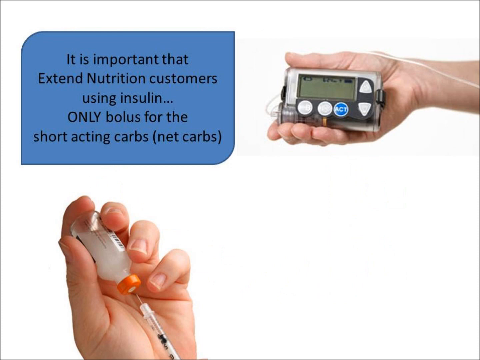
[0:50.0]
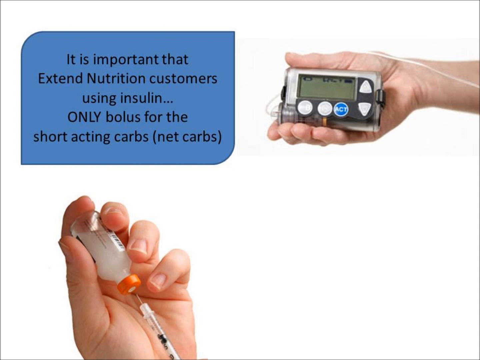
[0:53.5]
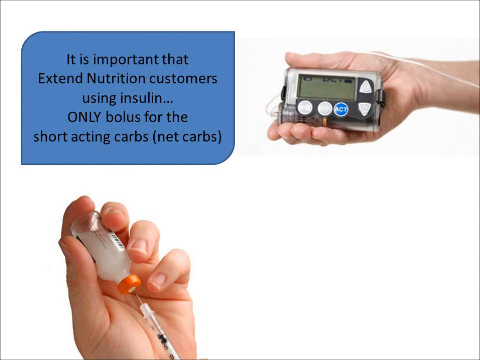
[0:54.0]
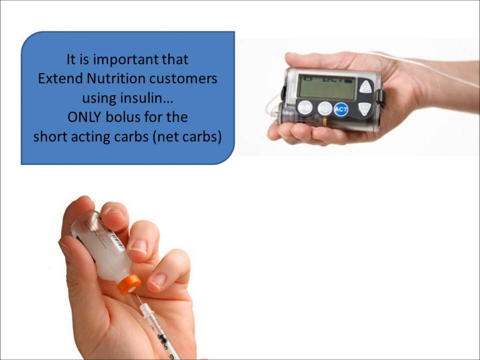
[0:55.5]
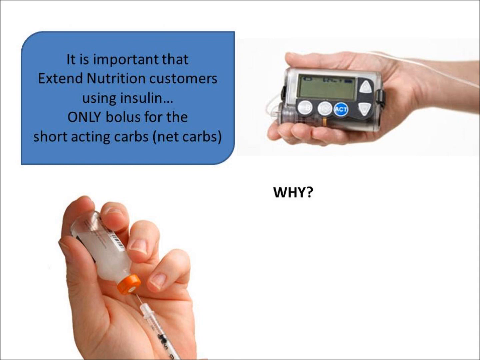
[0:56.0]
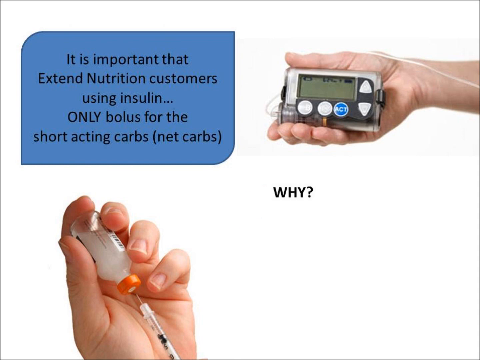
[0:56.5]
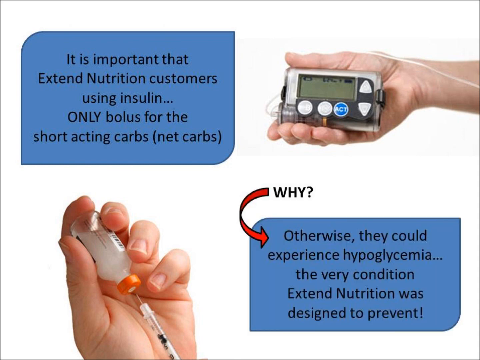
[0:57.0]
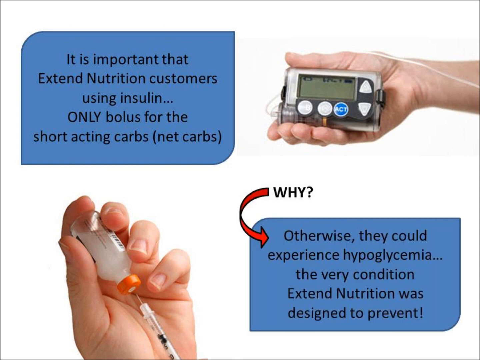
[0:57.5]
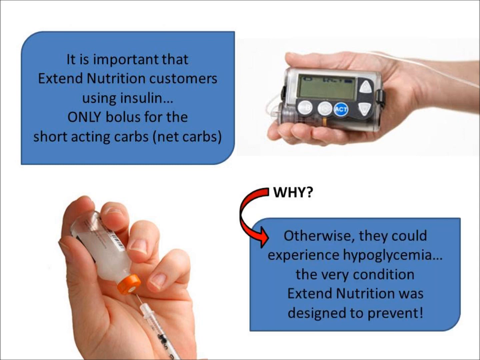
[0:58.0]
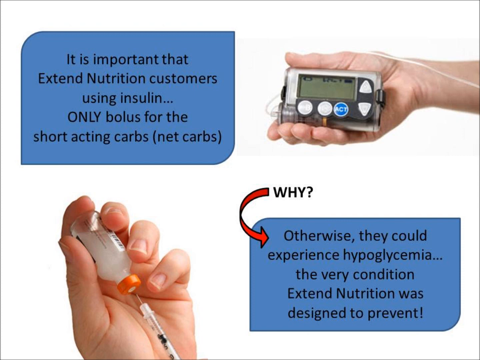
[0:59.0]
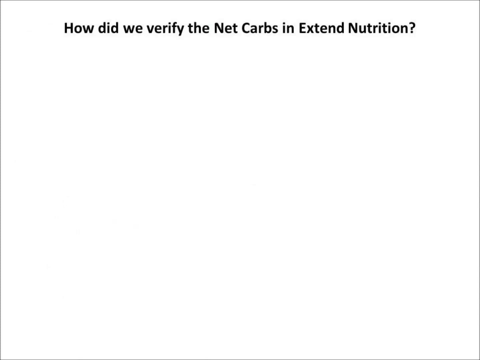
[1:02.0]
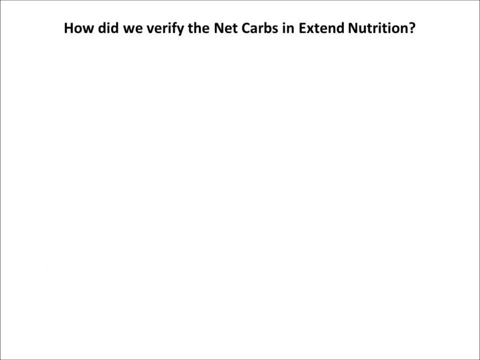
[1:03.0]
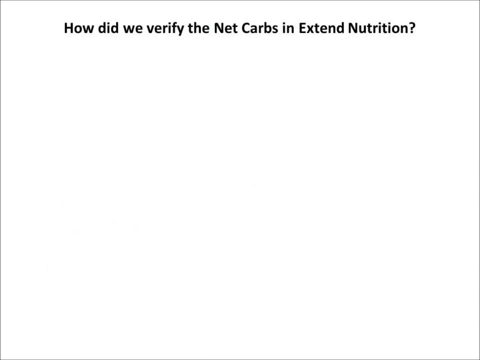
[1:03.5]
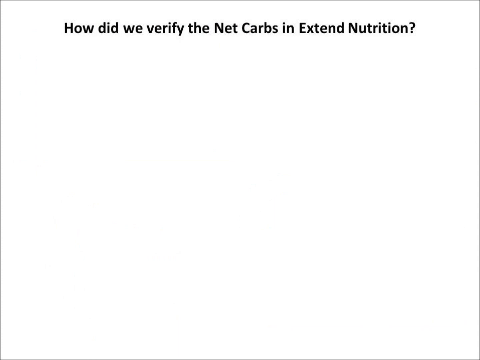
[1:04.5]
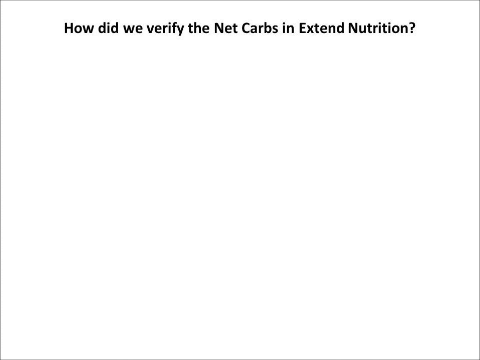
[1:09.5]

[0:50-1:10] The screen with the person, the blood sugar monitor and the injection, apparently an insulin injection, remains. Added to the text already there, "why?" appears, and then a small graphic pops up reading "otherwise, they can experience hypoglycemia, the very condition Extended nutrition was designed to prevent." A new screen then briefly appears asking "how do we verify the net carbs and extended nutrition?"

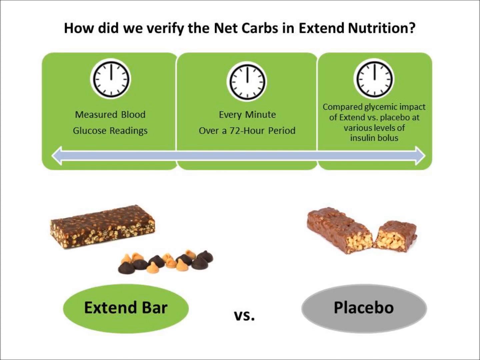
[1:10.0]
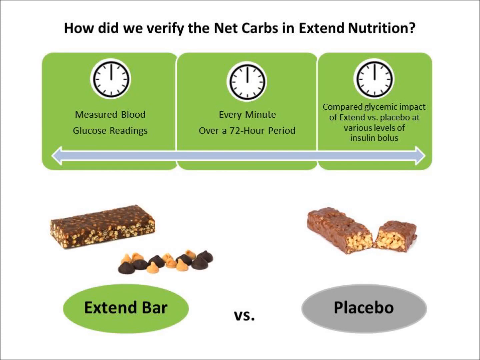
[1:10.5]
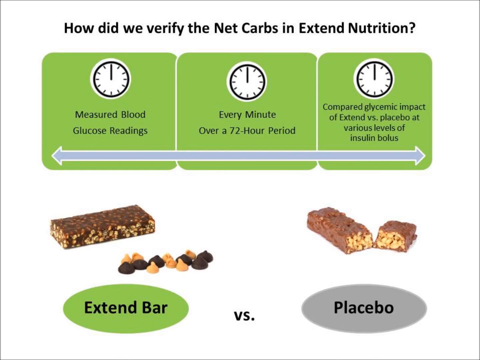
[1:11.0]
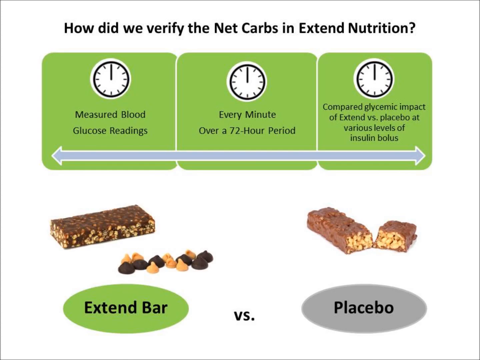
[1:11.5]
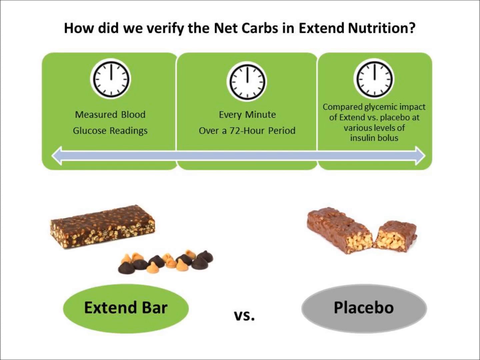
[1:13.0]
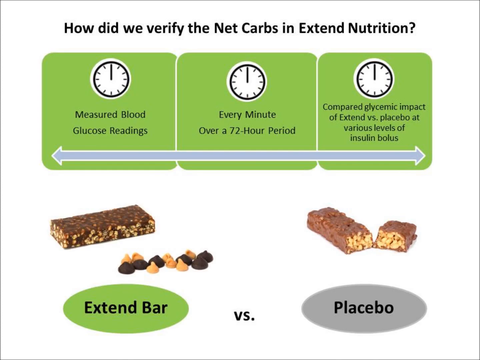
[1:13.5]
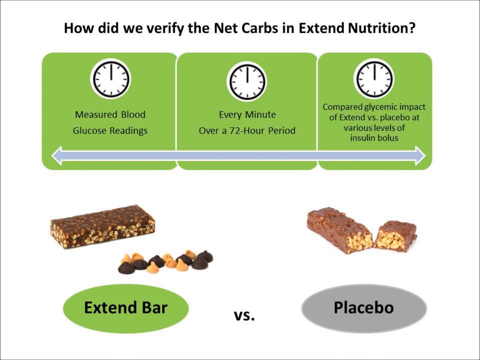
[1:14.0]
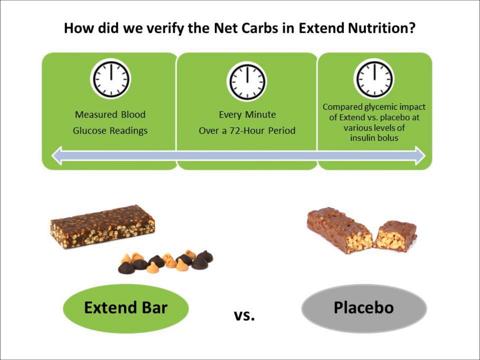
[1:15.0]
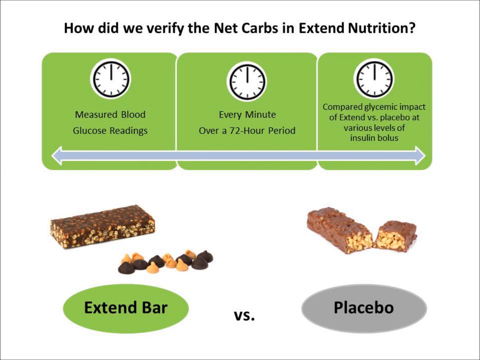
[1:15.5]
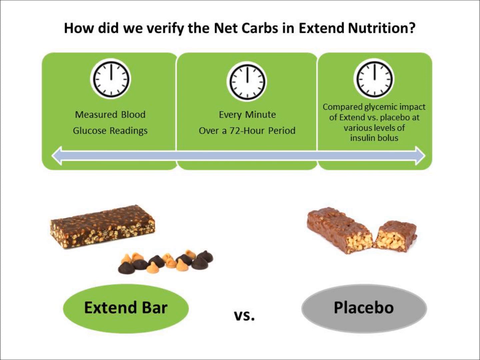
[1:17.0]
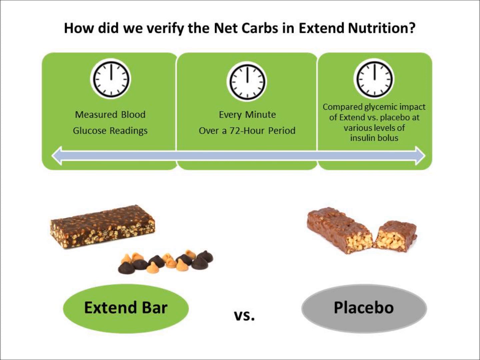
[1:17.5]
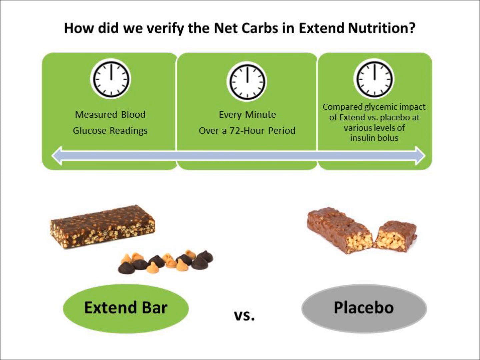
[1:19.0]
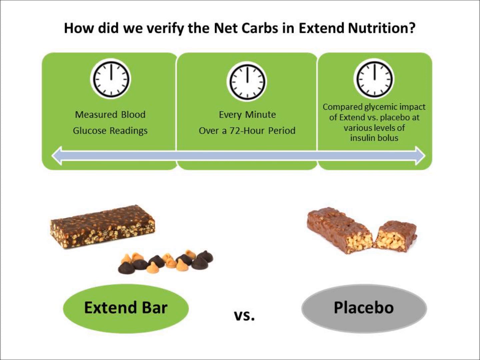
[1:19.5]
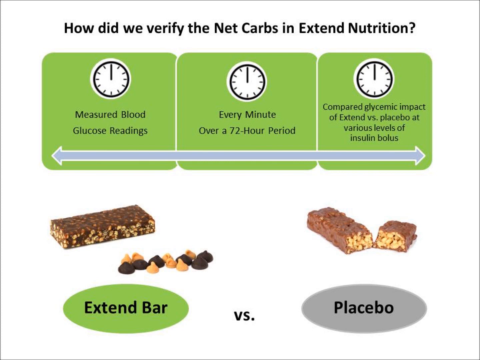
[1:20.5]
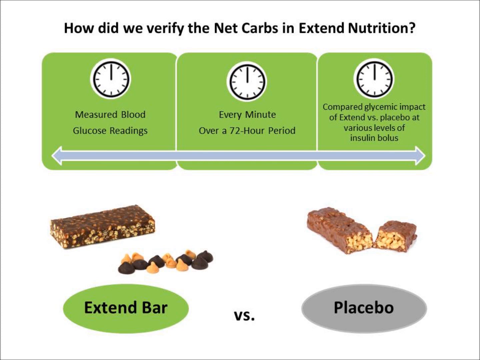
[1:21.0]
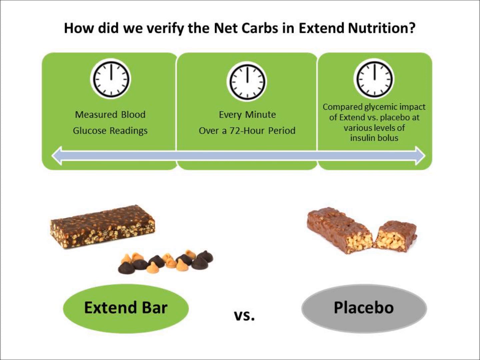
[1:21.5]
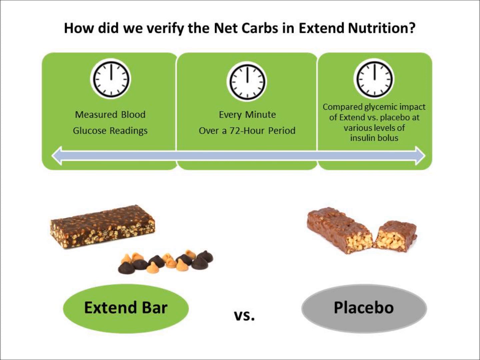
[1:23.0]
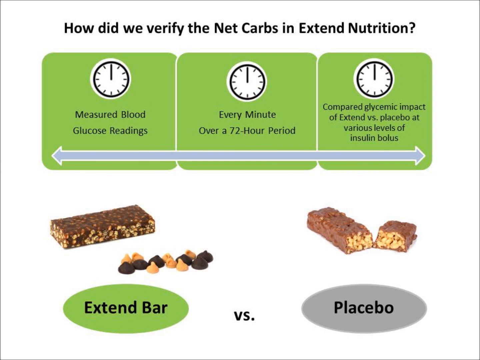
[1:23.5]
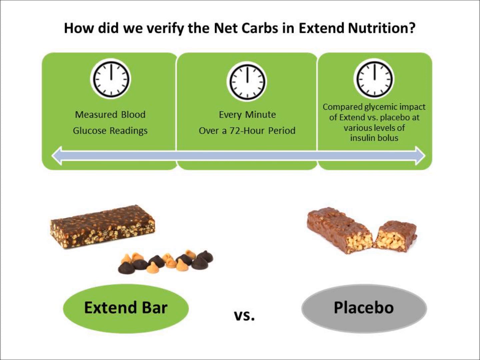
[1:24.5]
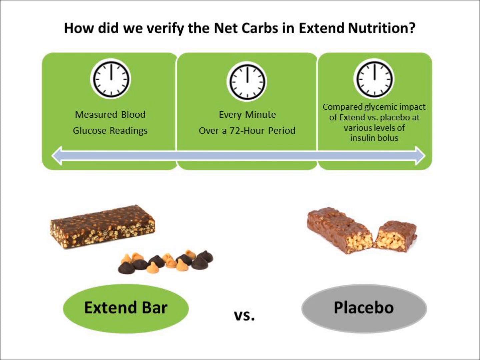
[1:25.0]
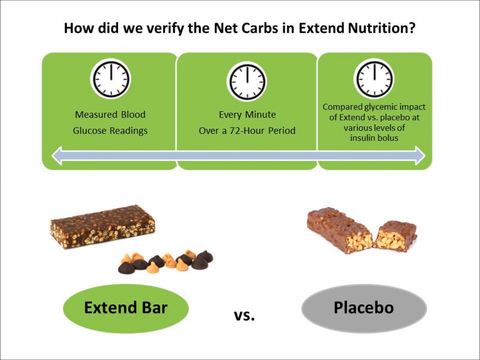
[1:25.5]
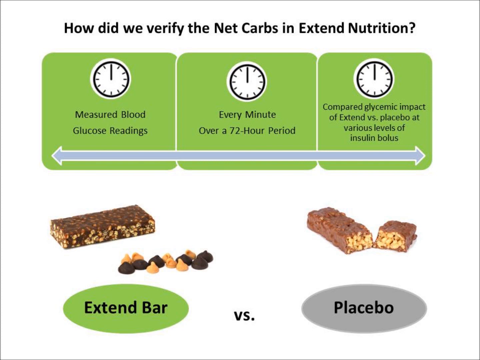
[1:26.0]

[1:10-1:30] The screen asks "how do we verify the net carbs and extended nutrition?" A graph is in the middle, with the Extend bar on one side and the placebo on the other; both look like chocolate-covered granola bars, maybe with nuts inside. The graphic has a sort of arrow line with three green rounded rectangles and a clock. On the far left it reads "measured blood glucose readings," in the middle "every minute over a 72-hour period," and on the far right "compared glycemic impact of extended versus placebo at various levels of insulin bolus." Something pops up at the end.